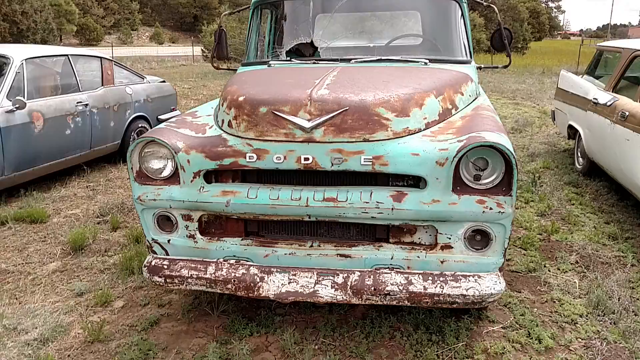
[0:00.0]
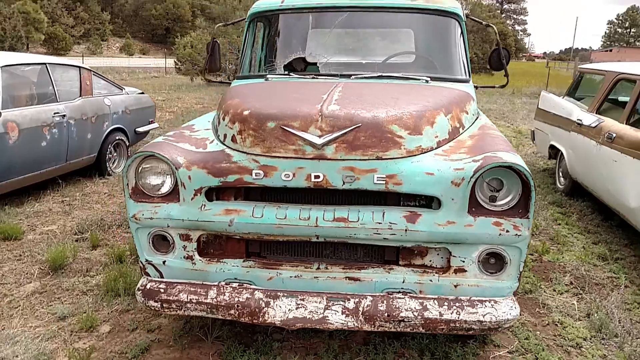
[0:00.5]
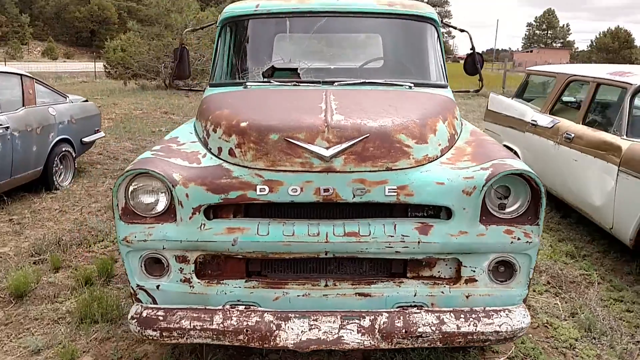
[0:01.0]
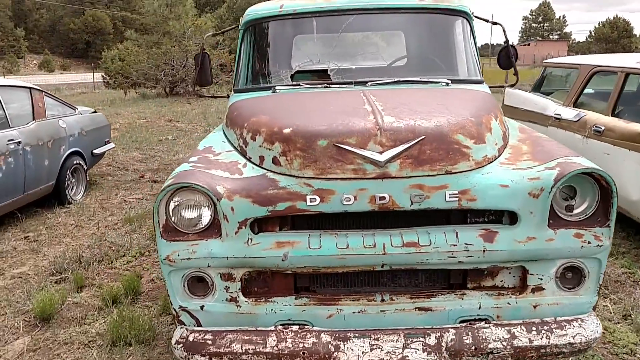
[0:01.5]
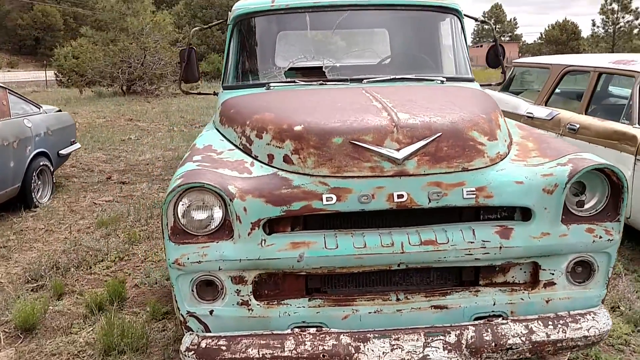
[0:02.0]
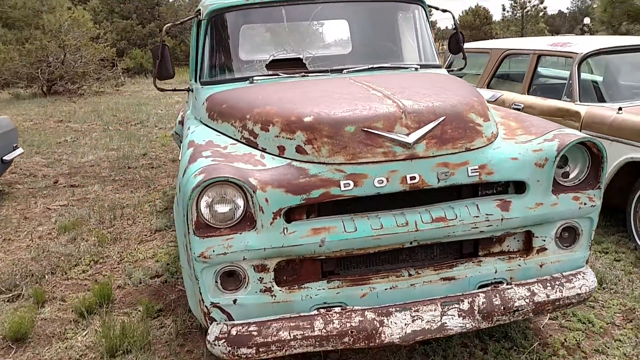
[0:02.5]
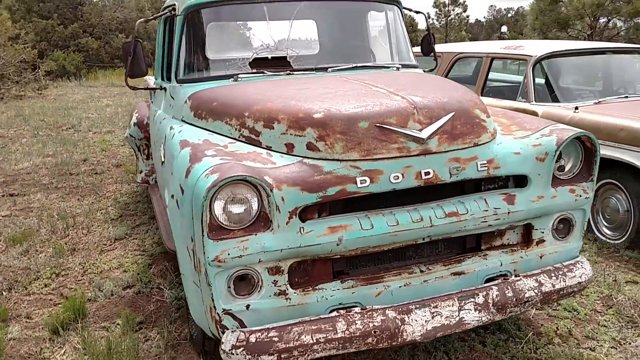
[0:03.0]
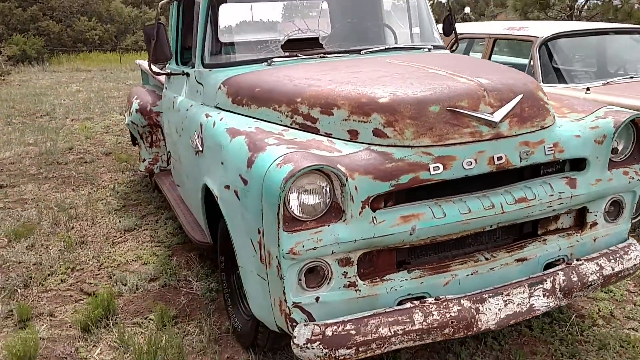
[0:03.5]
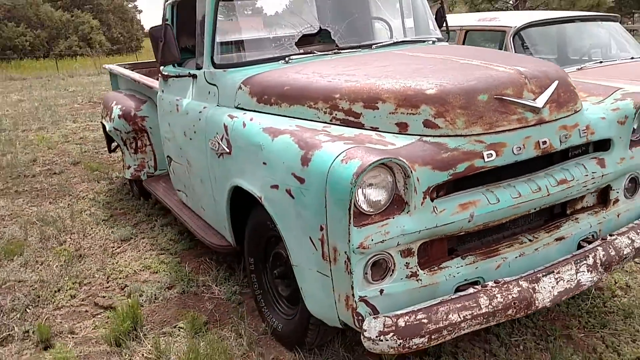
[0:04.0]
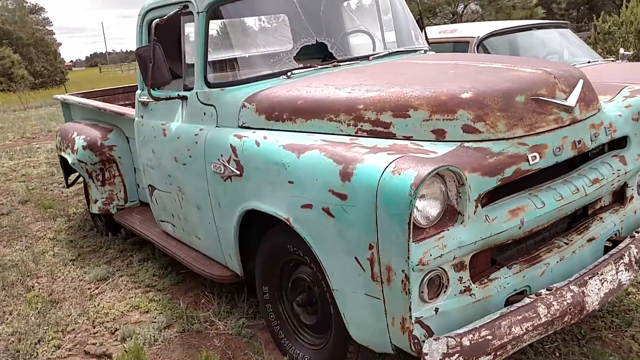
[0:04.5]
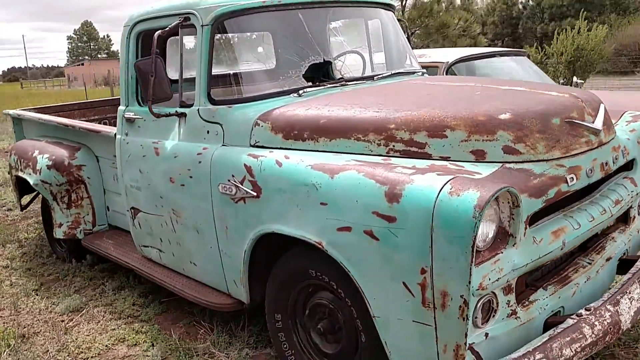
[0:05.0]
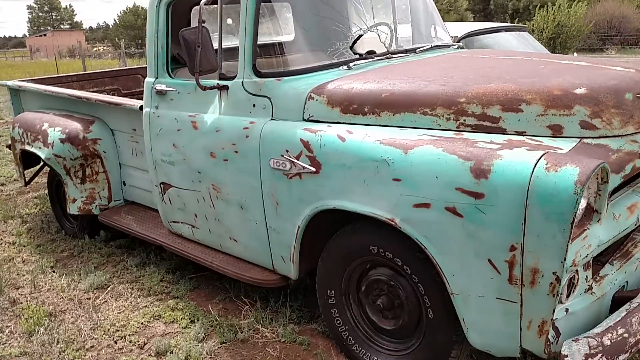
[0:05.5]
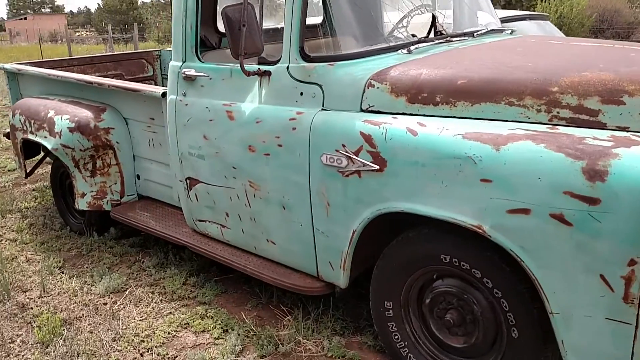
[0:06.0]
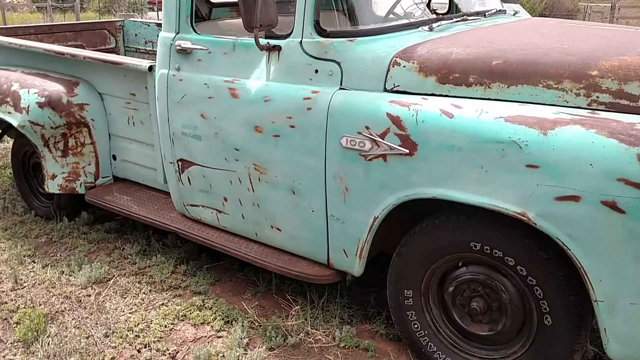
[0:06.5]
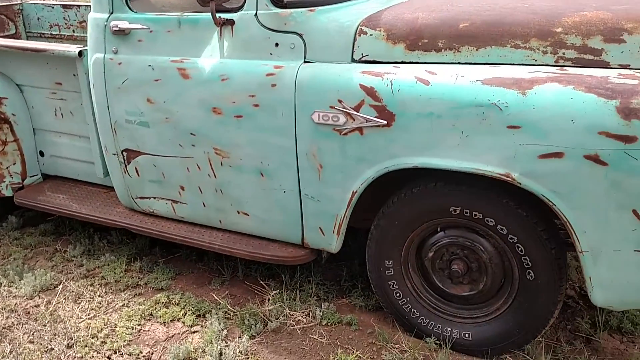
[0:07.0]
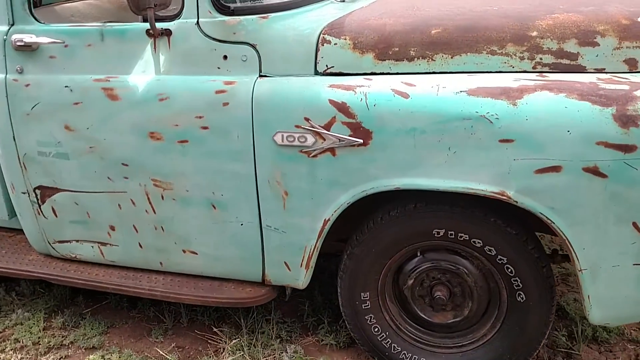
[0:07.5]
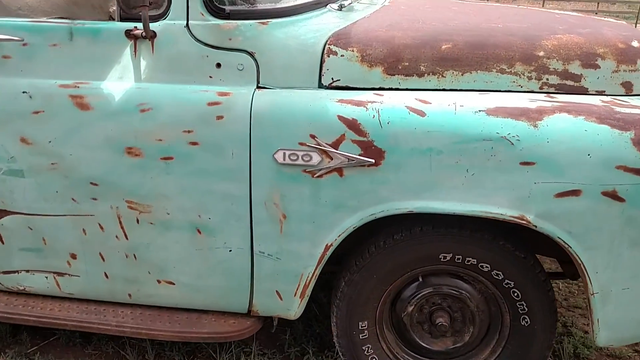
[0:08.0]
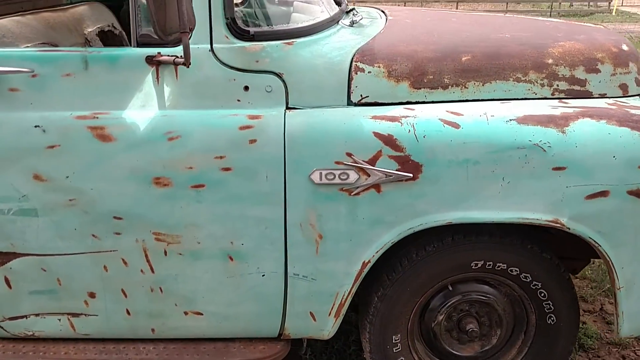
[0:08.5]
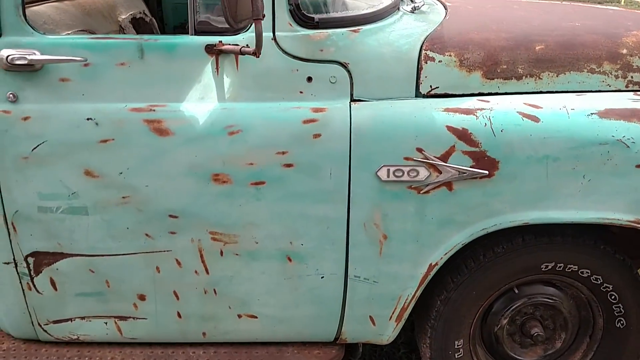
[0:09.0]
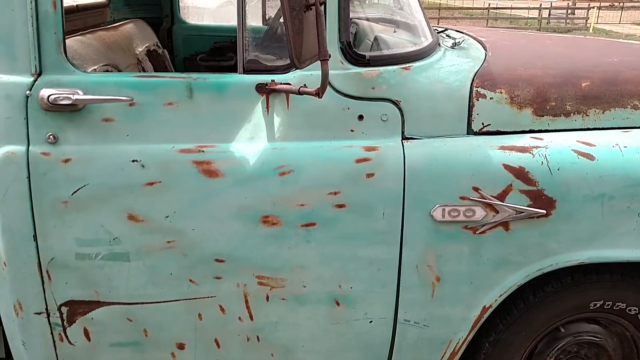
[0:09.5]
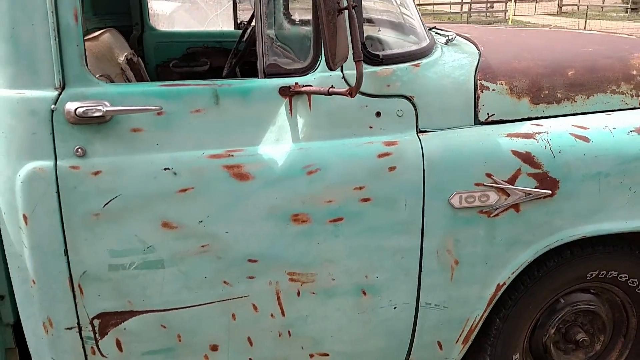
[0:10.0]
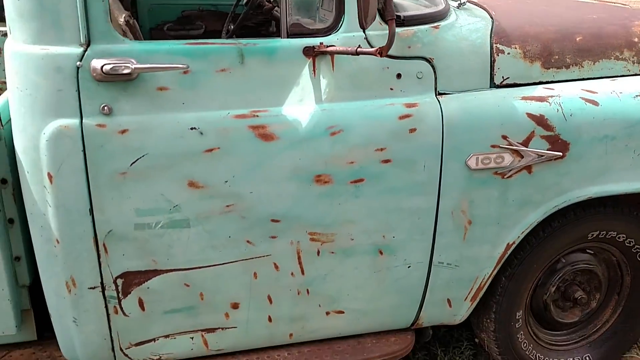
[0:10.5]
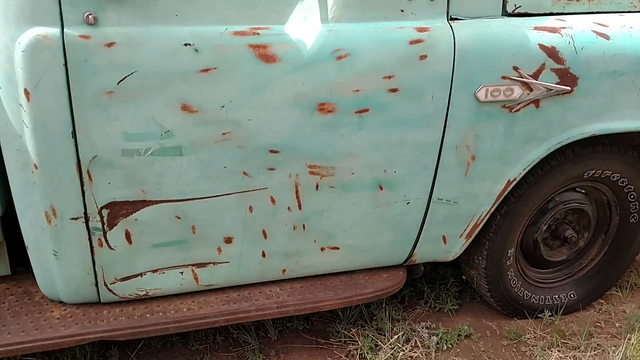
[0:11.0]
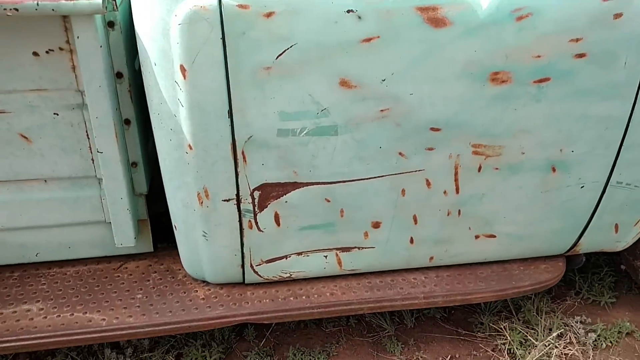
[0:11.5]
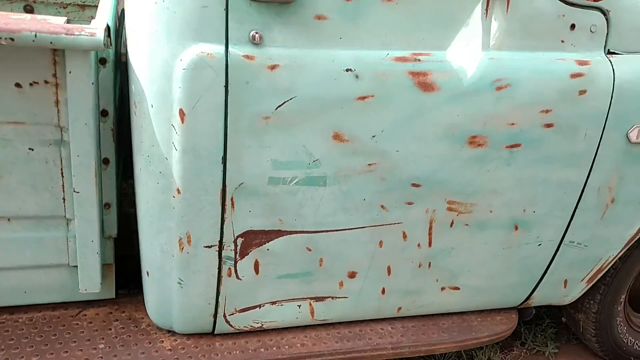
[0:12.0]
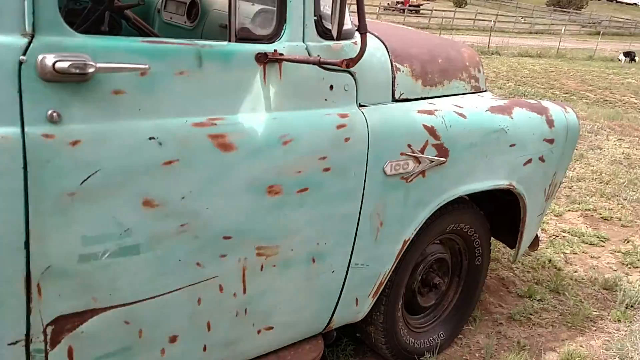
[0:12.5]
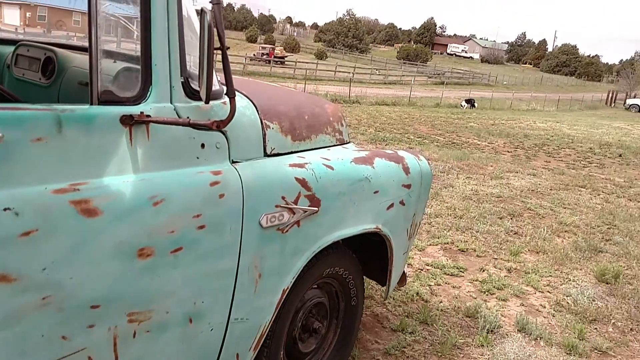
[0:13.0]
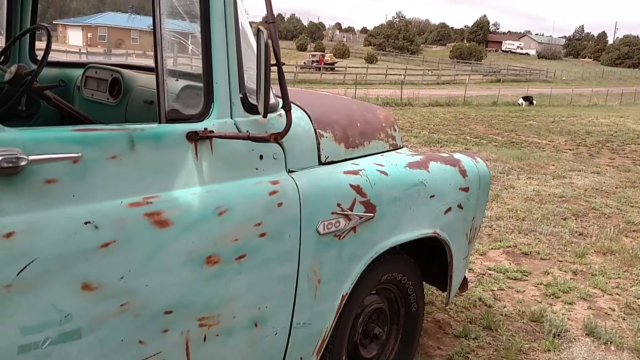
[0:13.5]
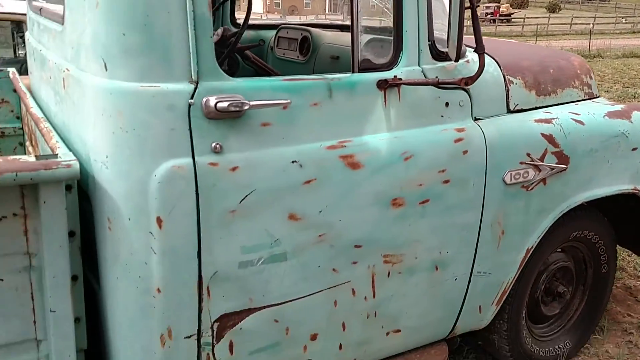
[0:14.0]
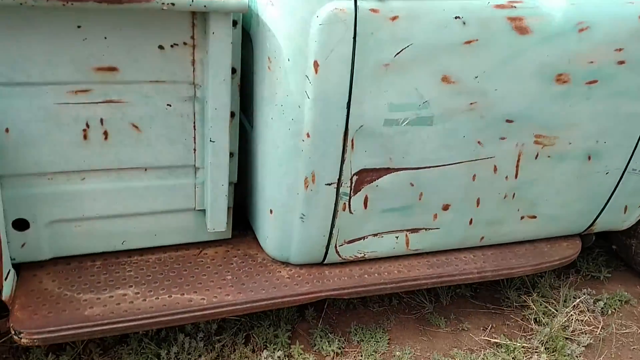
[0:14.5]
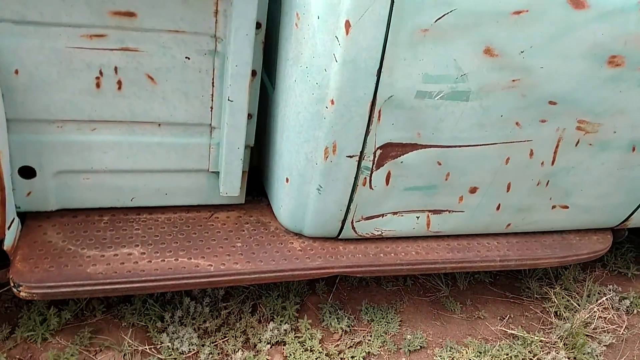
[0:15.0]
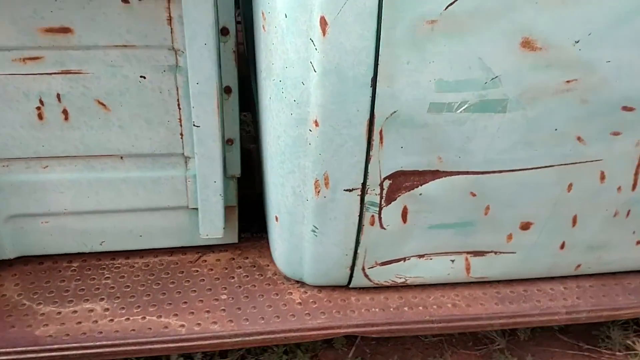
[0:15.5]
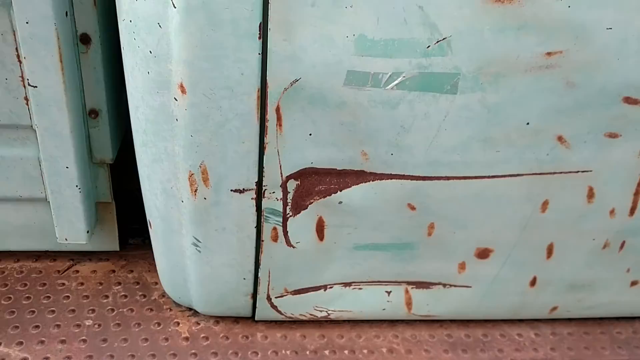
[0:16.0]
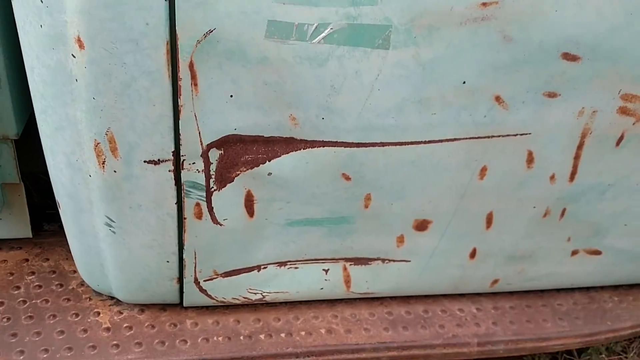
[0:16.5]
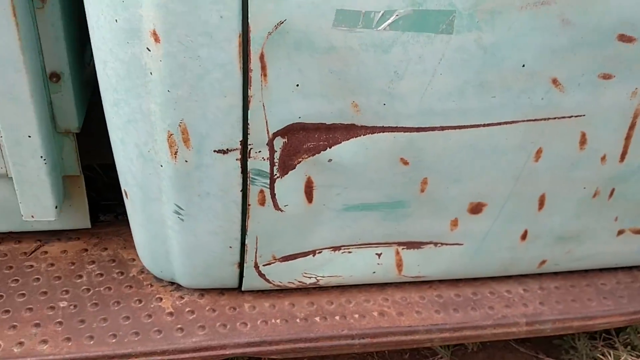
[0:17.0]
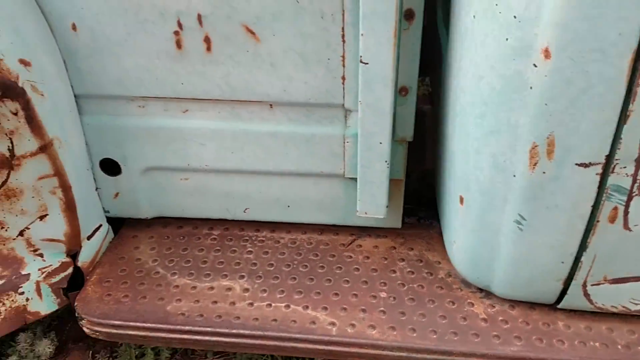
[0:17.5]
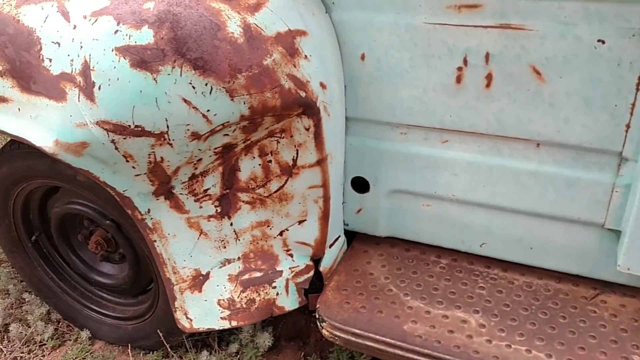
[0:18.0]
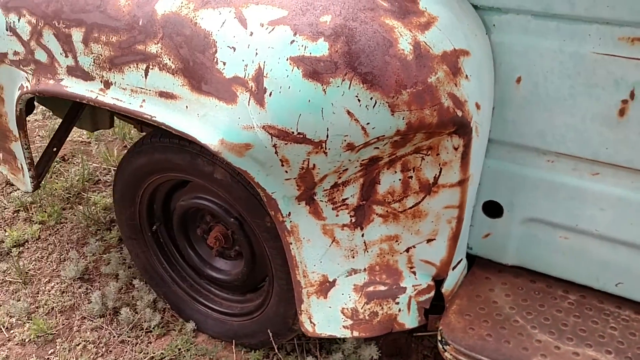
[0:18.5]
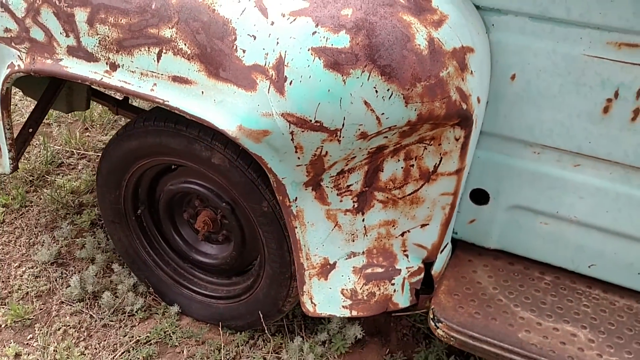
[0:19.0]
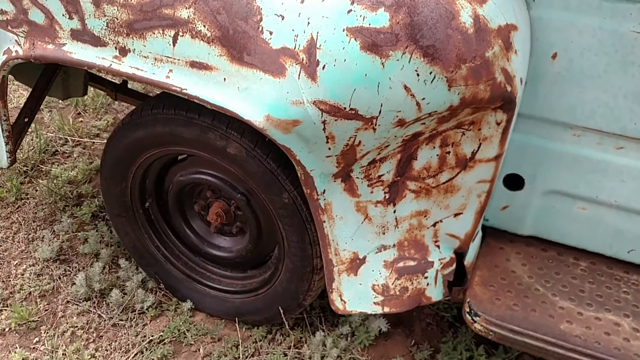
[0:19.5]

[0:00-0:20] A Dodge truck is shown in what looks like some kind of junkyard, with a bunch of old cars parked in the grass. Trees are visible in the background, there is a road on the left side and a road on the right side, and electrical posts stand in the backdrop. The truck is white and looks very faded, its paint rusted and torn off. It faces the camera, and then the video pans around to the left side of the truck, showing that the body is pretty damaged all the way around, with a whole bunch of brown marks and scuffs all over it. The camera looks to the right a little, where there is possibly a dog way in the back, and then looks at the fender on the back left side of the truck, which is very rusted and torn up. The windows are open and the rear view mirrors are visible. The place appears to be near a farm, with some kind of fence in the background that looks like it is meant to hold in animals.